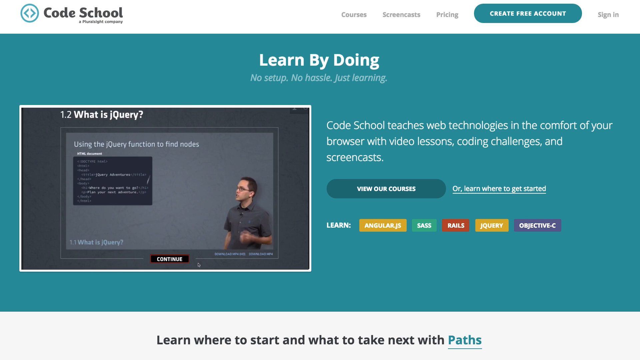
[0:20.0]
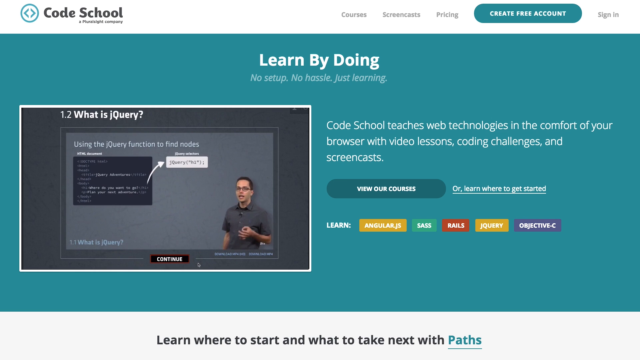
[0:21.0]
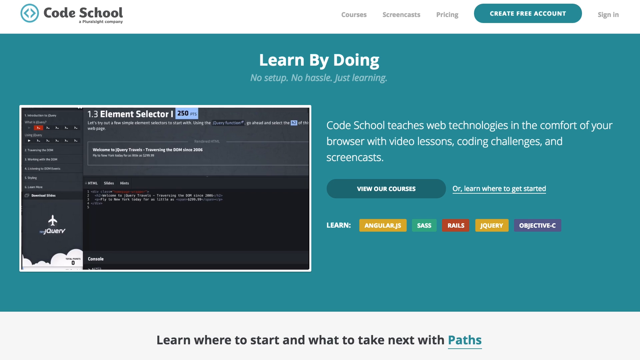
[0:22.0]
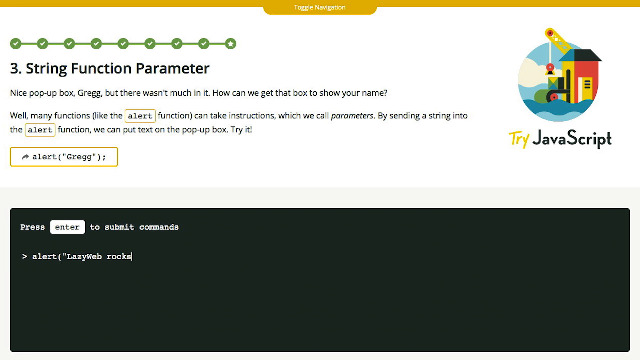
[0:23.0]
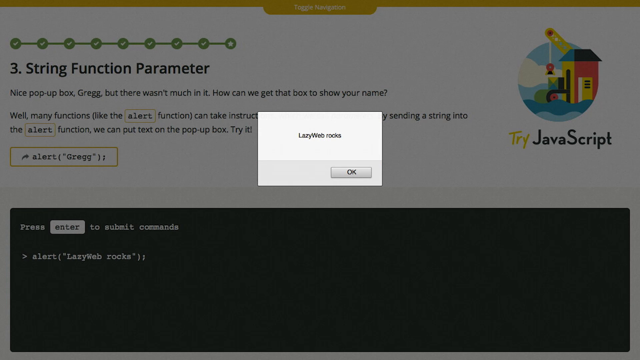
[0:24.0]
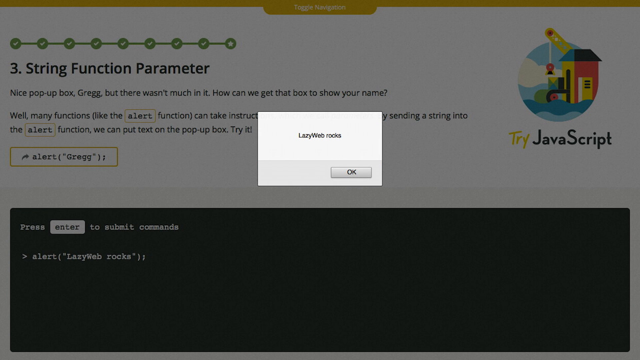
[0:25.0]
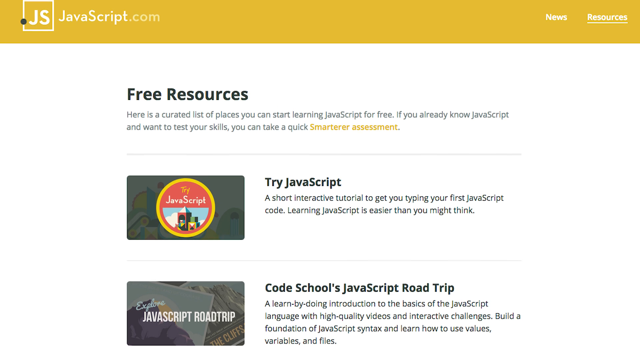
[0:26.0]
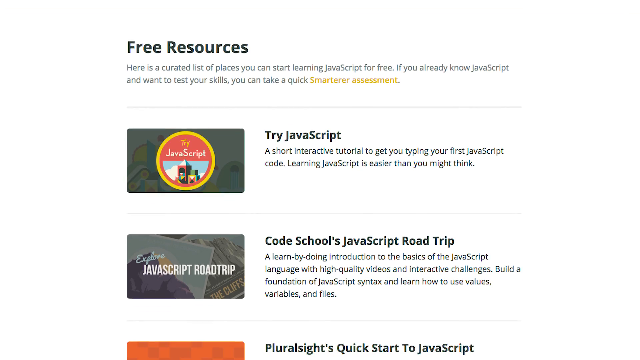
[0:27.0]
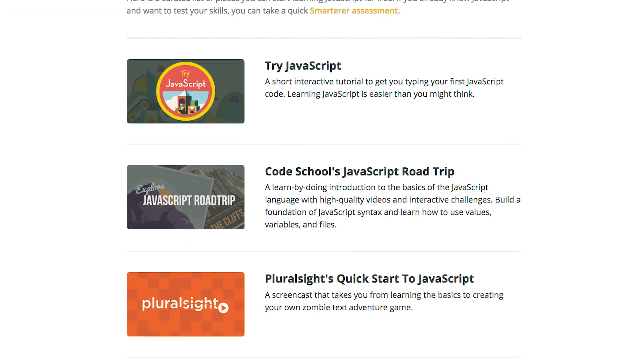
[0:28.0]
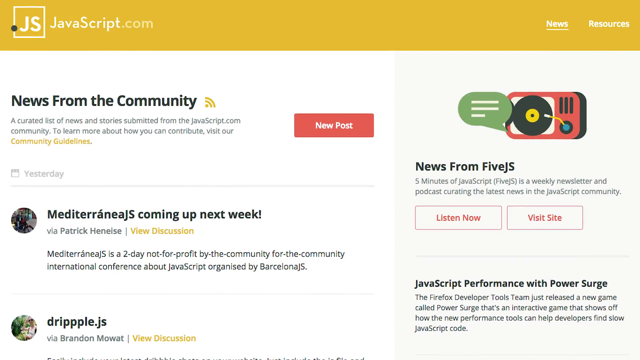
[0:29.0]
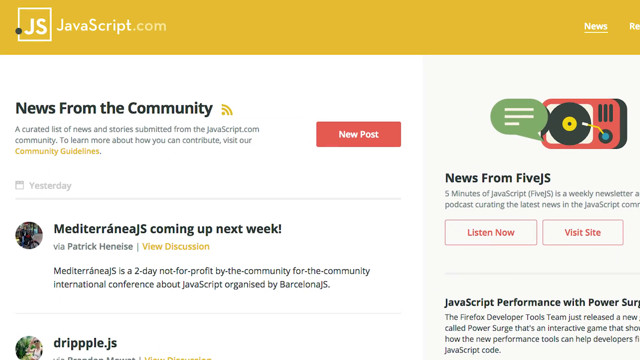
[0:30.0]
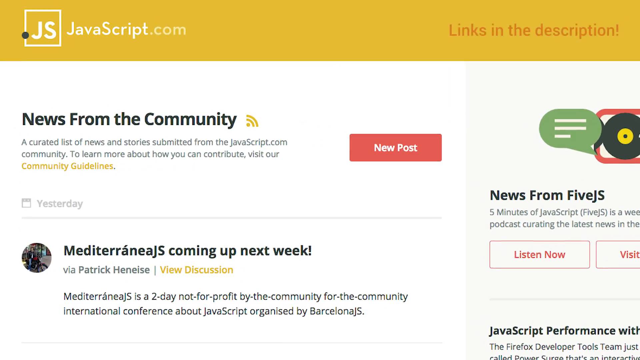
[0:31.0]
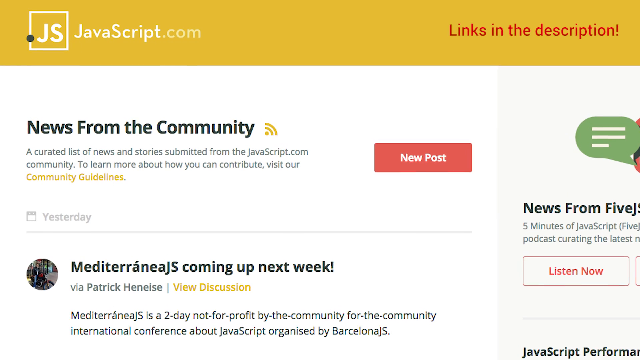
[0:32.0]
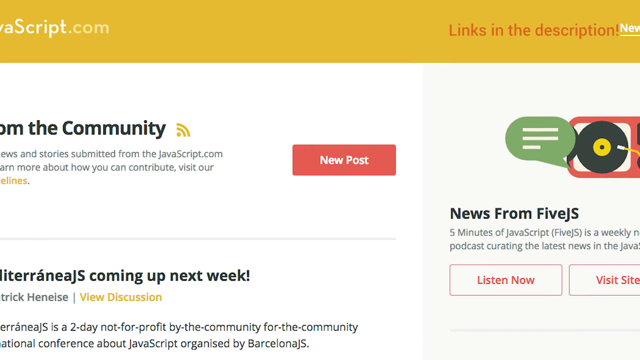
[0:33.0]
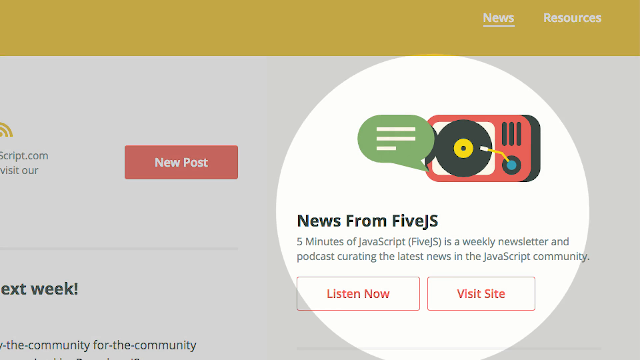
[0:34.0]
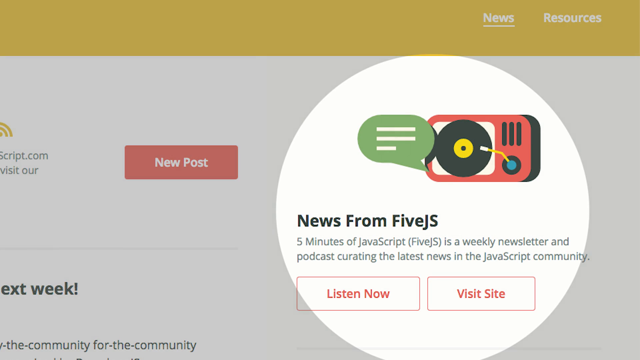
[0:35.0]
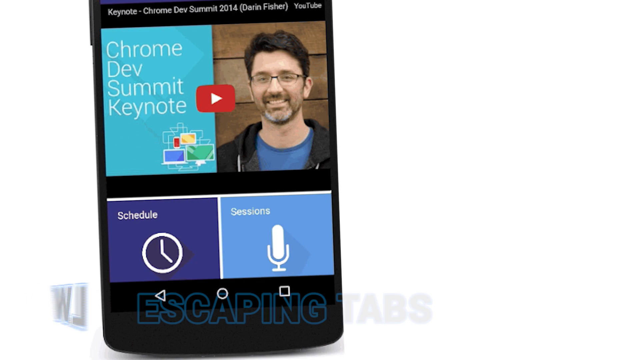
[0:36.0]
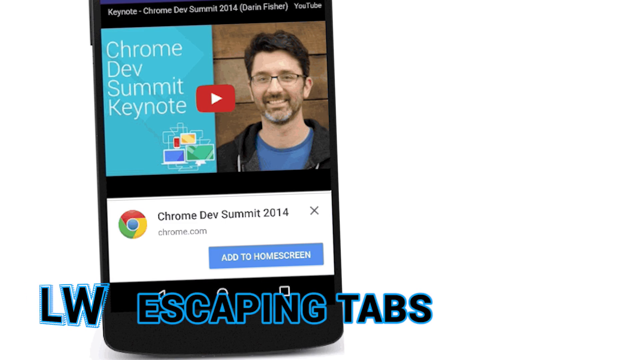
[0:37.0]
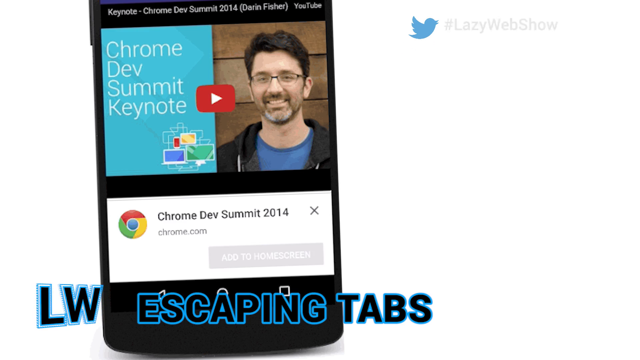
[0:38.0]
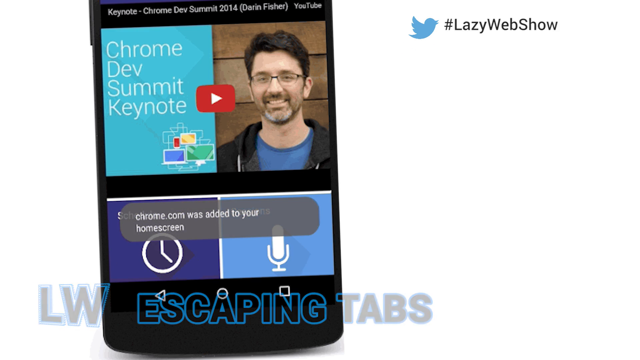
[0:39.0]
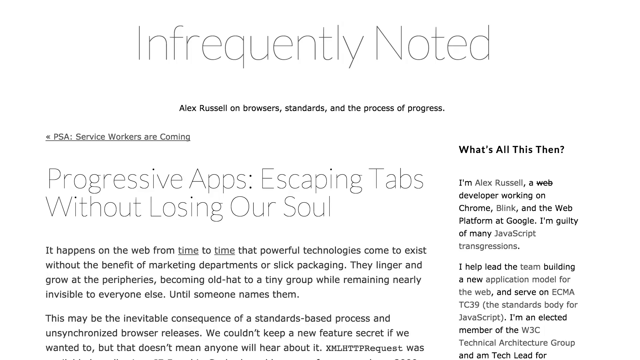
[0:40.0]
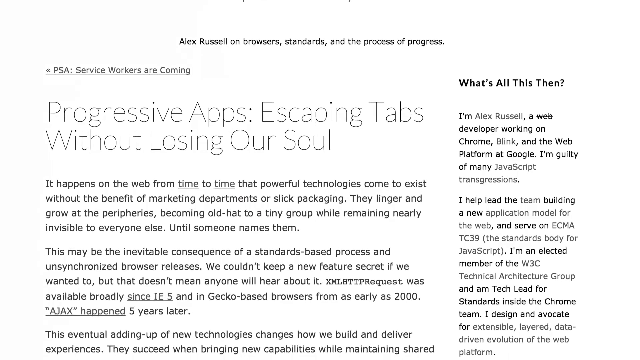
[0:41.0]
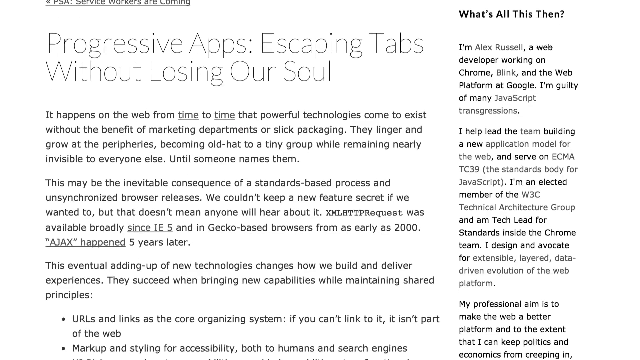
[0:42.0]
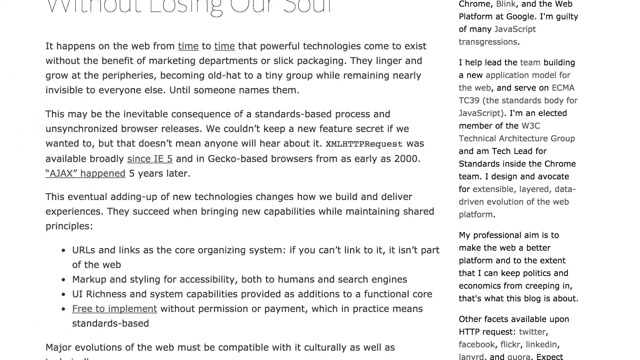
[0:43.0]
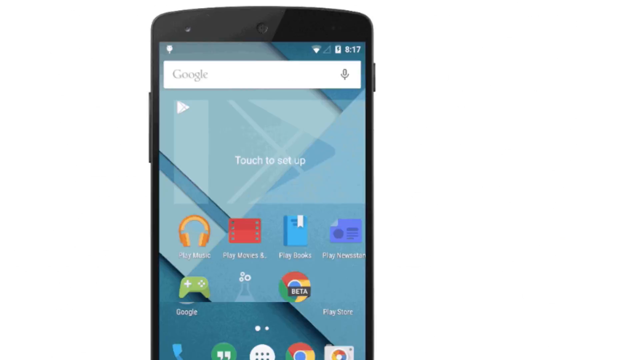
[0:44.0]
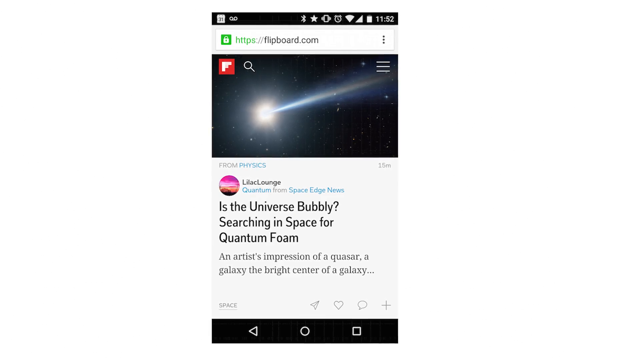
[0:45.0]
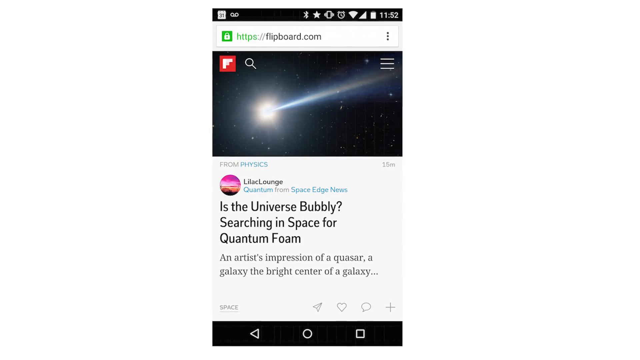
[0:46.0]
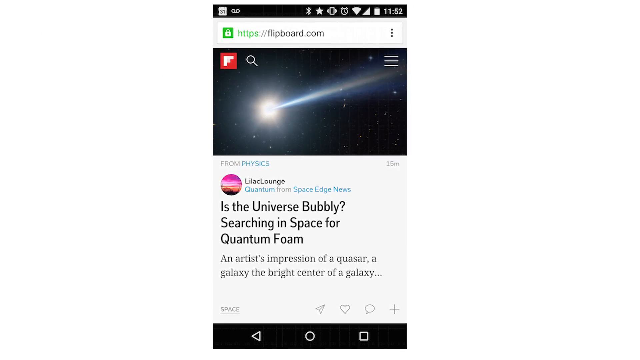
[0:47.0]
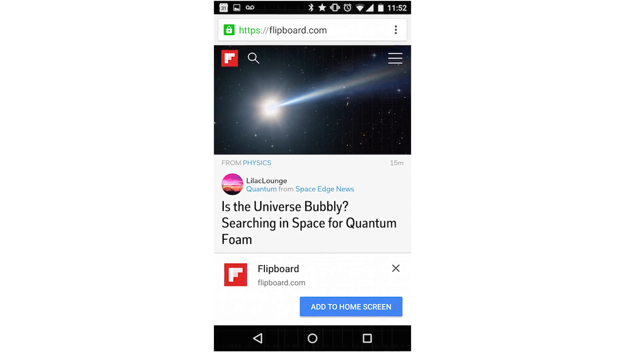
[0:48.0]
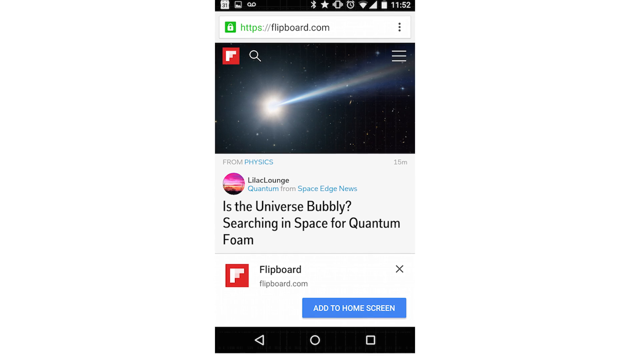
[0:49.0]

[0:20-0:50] The screen is dark teal with a white banner at the top; in the top left it says "Code School" in black. On the top right are options for "courses", "screencasts" and "pricing", and a blue tab says "create free account". Below, white text says "learn by doing", and italics under it say "no setup, no hassle, just learning". On the left-hand side, a box contains a moving video that looks like a presentation, with a man in the bottom right corner and a presentation on the screen behind him. White text next to it says "Code School teaches web technologies in the comfort of your browser with video lessons, coding challenges and screen casts". The video then switches to another tab called "string function parameter", where somebody is typing code at the bottom. Next comes a tab for free resources, and they scroll through a variety of resources. There is a page for news from the community and news from 5js, which is highlighted, followed by a phone with a YouTube video in the middle; at the bottom, blue text says "escaping tabs". A new blog post with lots of text appears, followed by a screenshot from a phone with the title "is the universe bubbly searching in space for quantum foam" and some text below it.